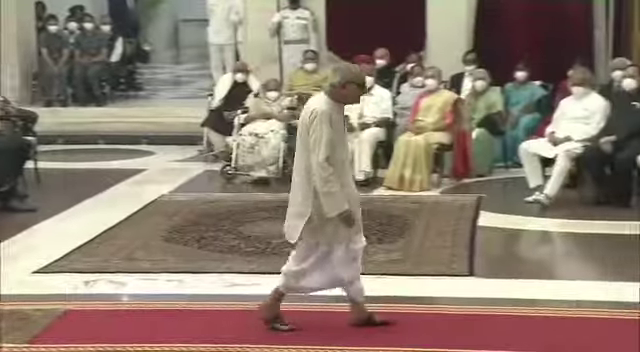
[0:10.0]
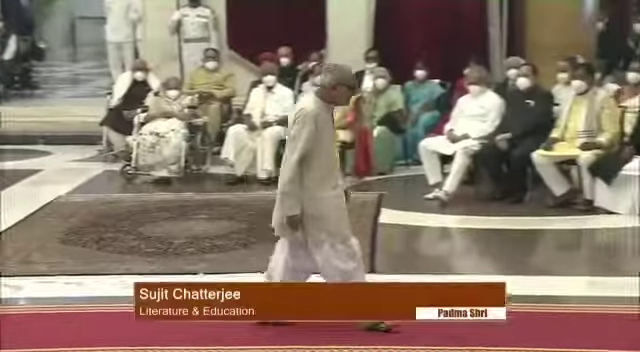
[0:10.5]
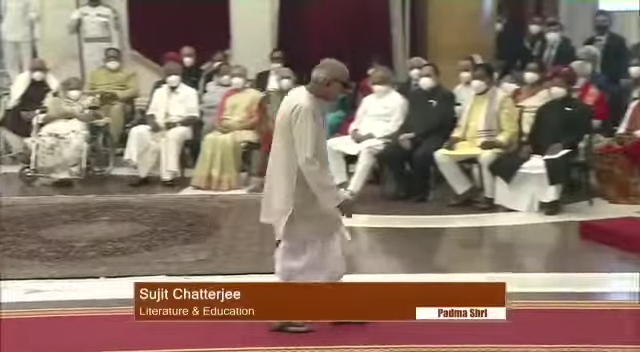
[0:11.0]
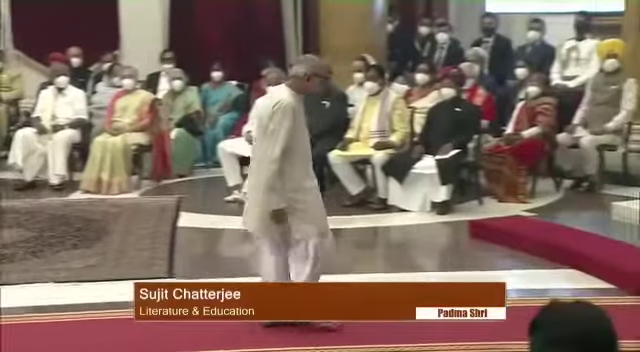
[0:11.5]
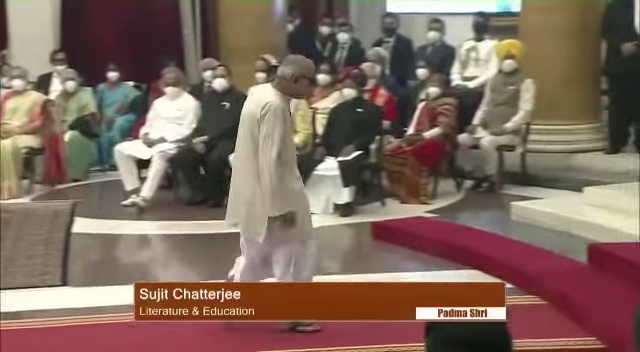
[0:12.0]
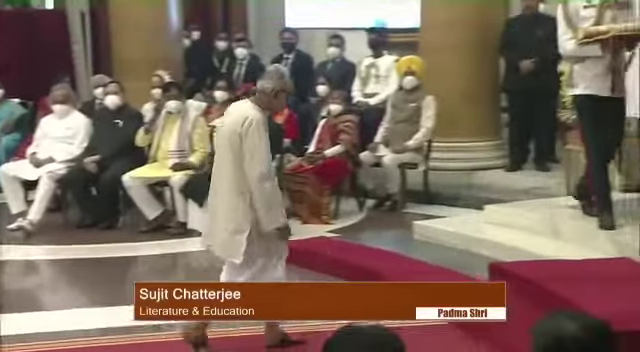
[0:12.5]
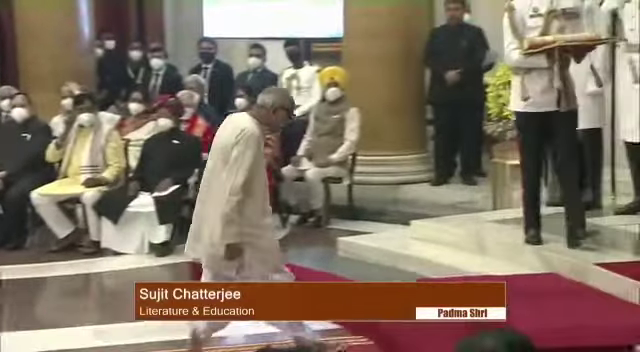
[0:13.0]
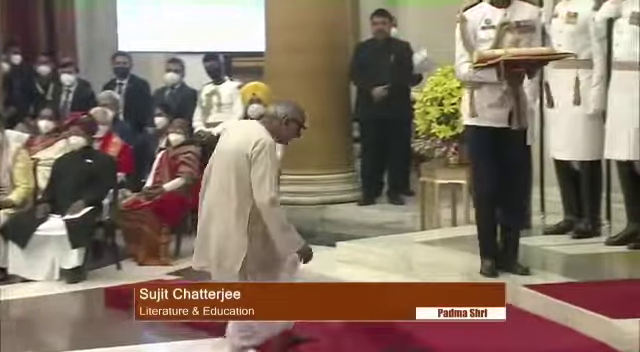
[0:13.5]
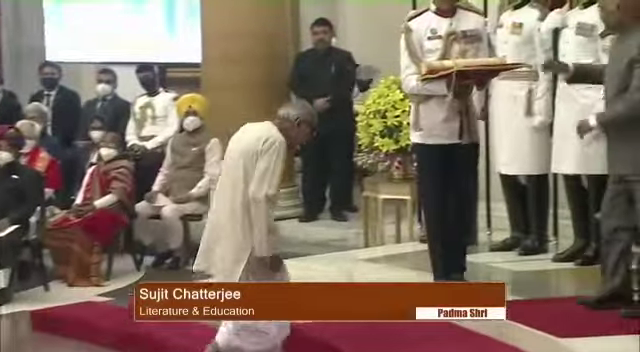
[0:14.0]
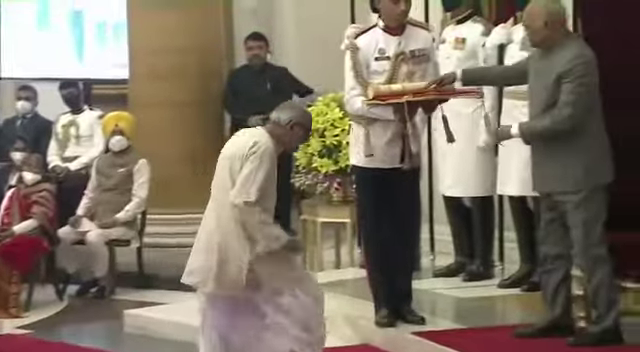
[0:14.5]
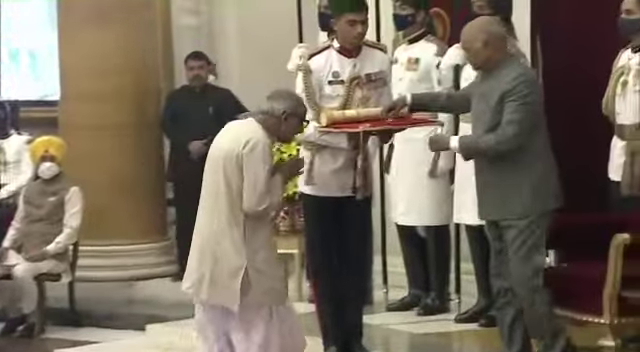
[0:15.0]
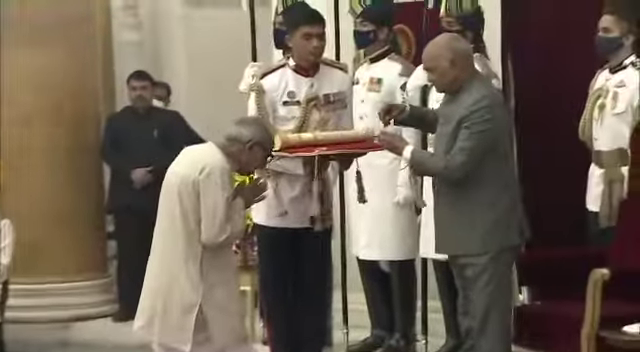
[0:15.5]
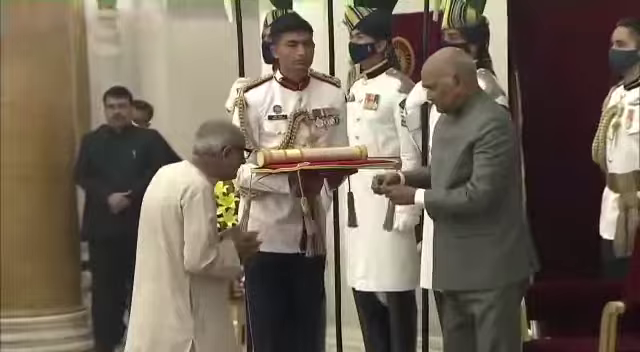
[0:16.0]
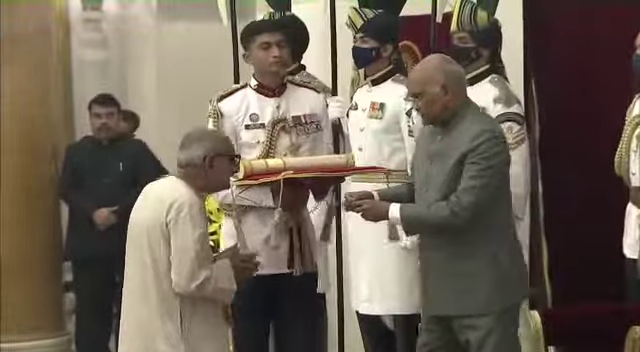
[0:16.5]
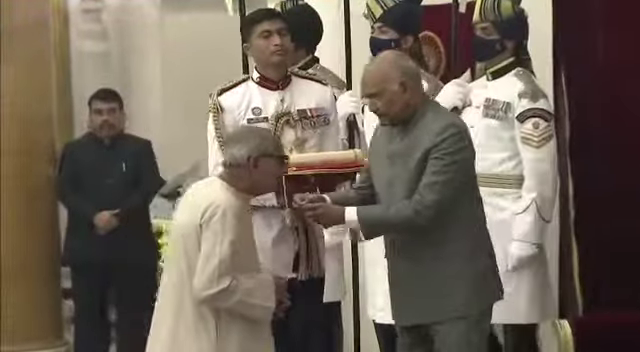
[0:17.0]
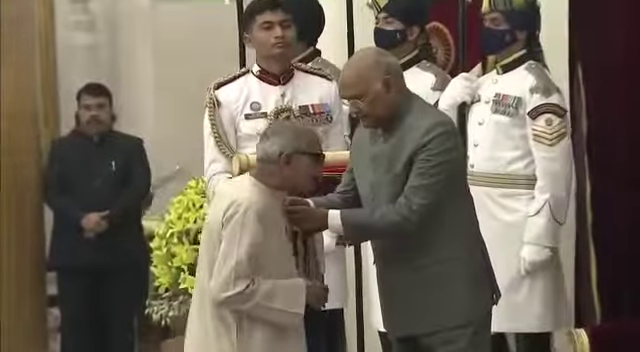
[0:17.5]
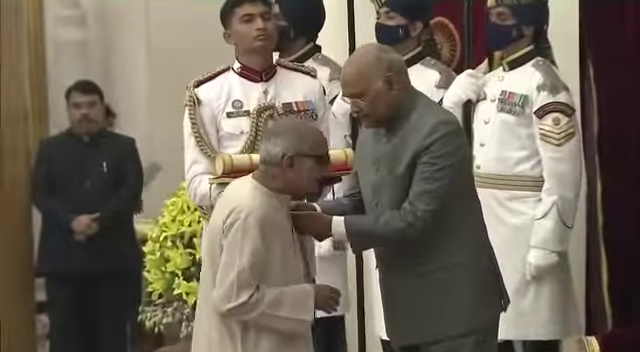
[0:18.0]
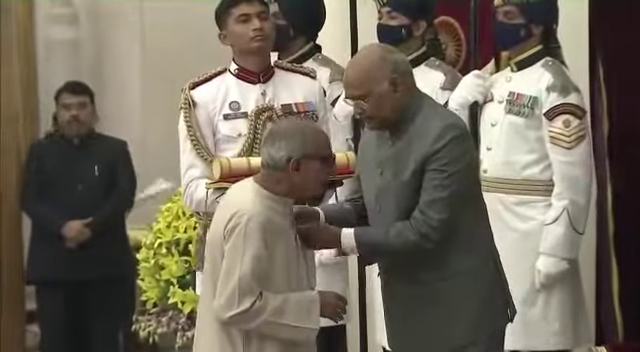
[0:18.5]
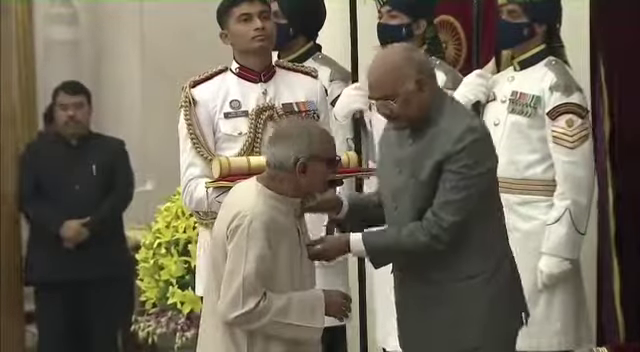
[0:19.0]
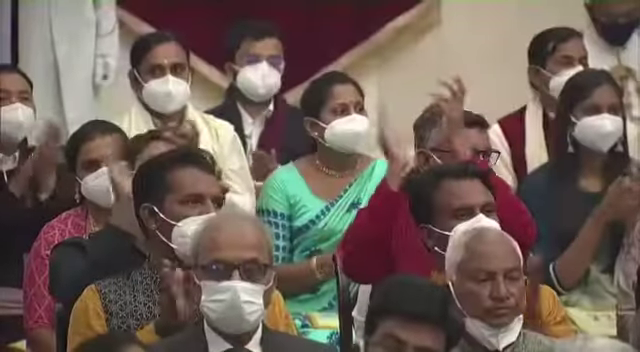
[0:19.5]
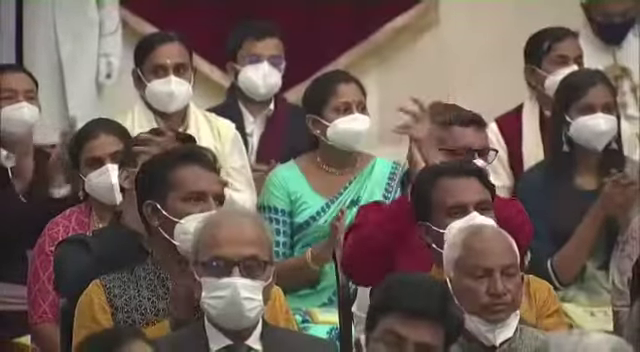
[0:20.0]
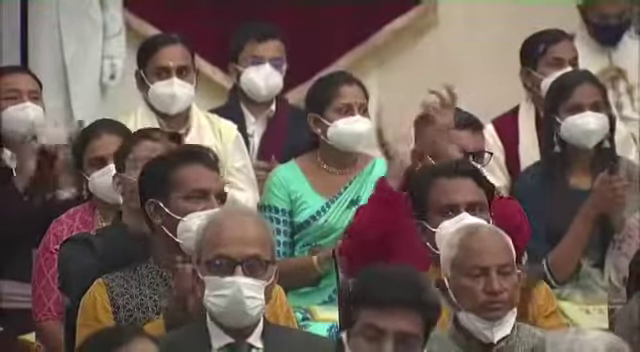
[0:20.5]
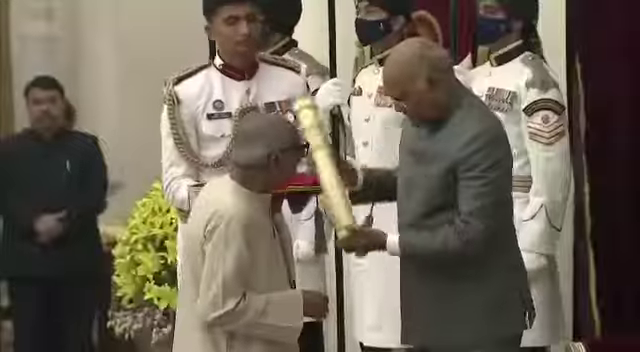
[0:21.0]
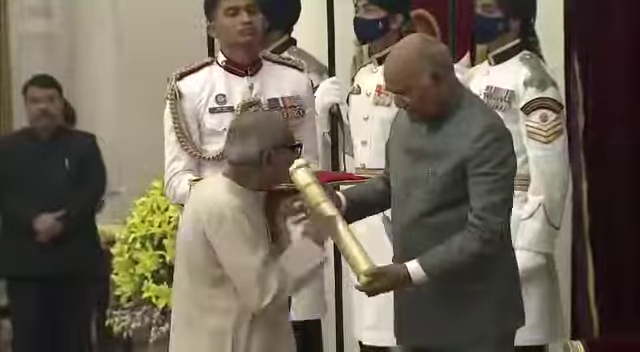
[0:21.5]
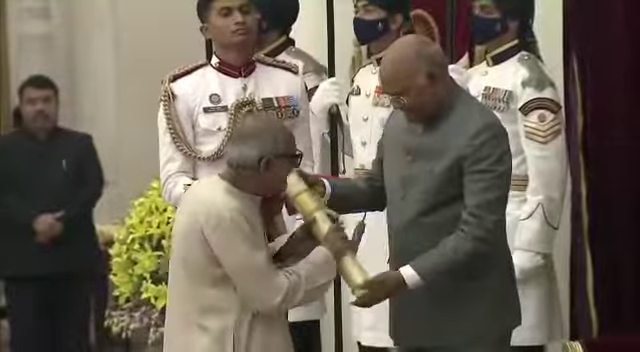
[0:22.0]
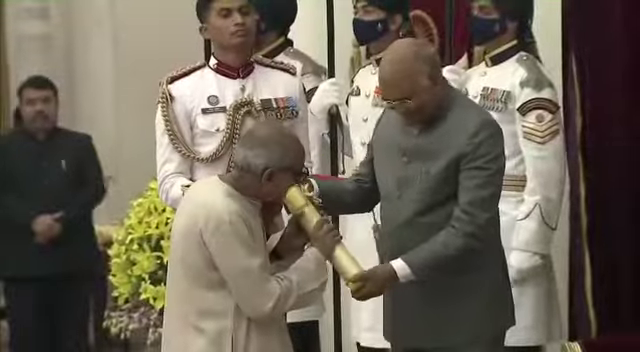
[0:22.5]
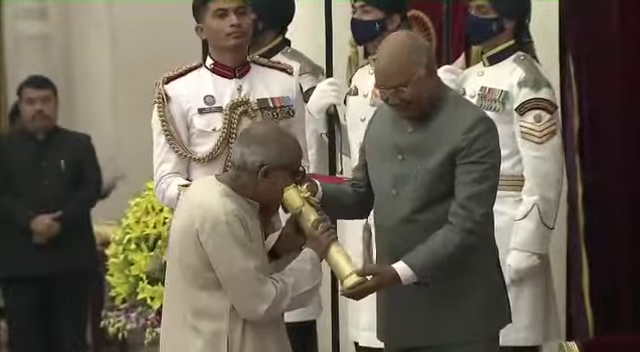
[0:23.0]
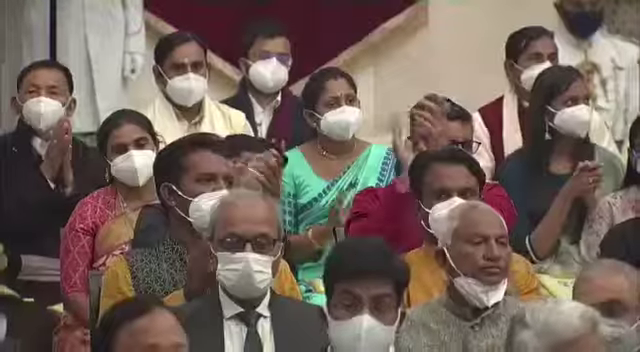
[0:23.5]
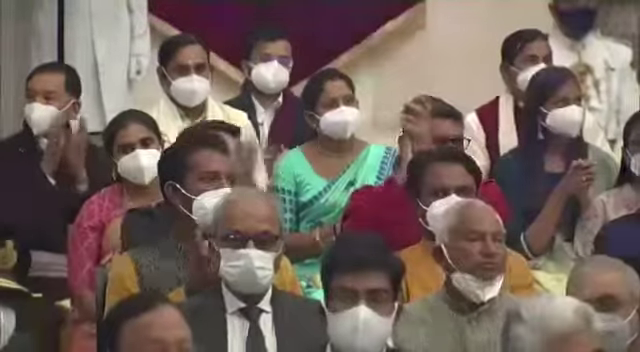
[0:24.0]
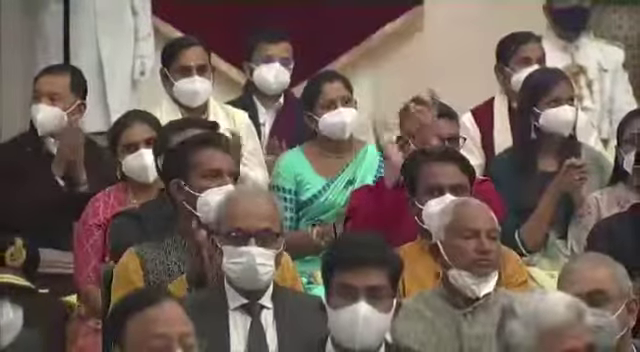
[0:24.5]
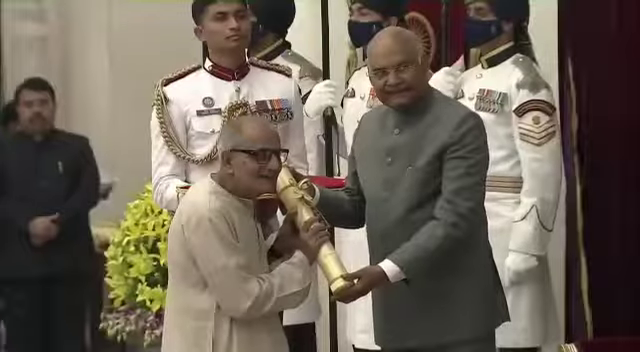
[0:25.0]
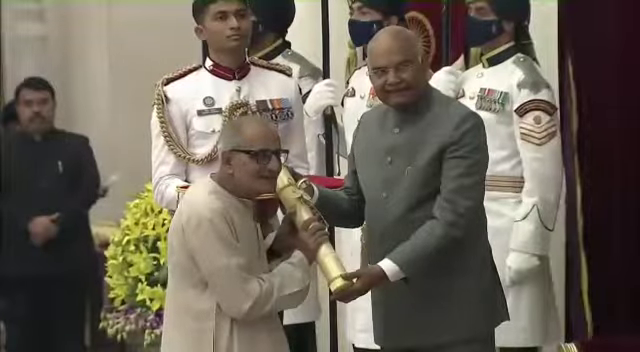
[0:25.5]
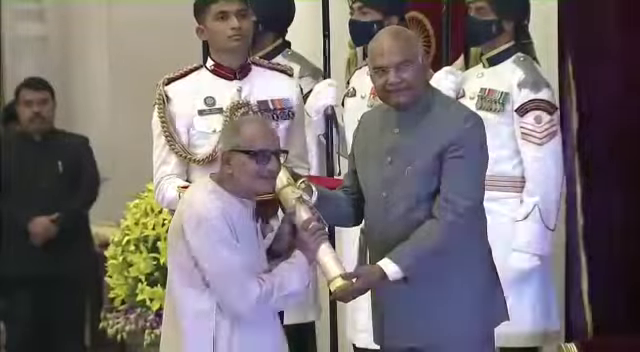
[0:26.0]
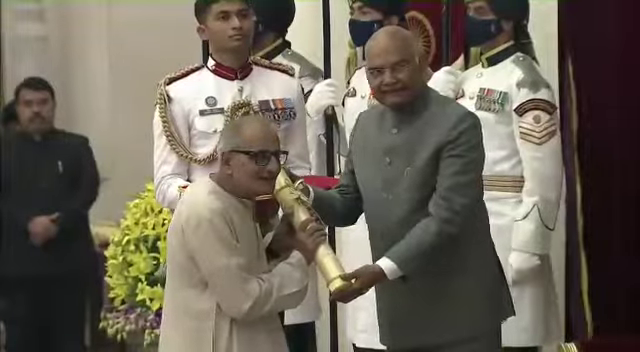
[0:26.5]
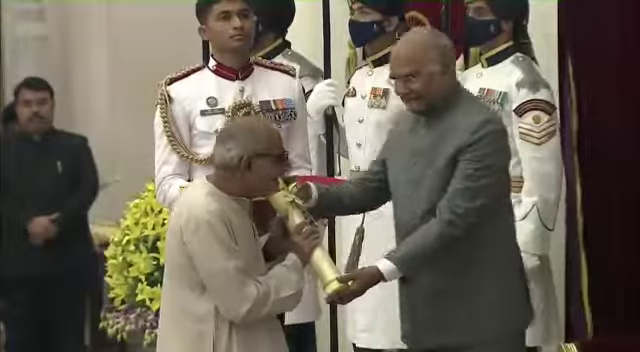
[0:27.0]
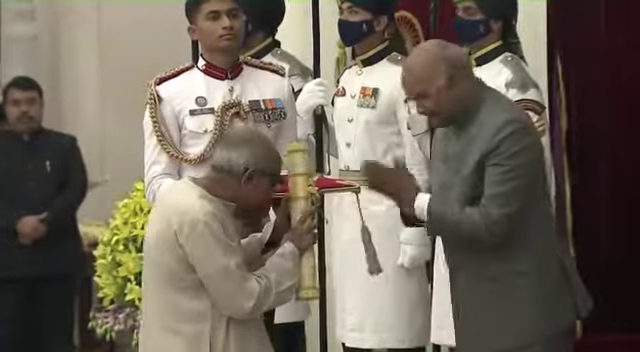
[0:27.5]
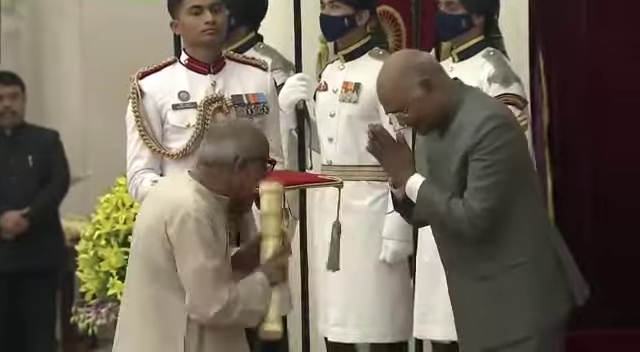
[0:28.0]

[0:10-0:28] The 77-year-old schoolteacher walks into the ceremony held in his honor, appearing very spry. He has ear-length gray hair and wears black-rimmed glasses, an untucked white long-sleeved shirt and white pants. He receives an award from a man who looks like some sort of official; the official has gray hair, is bald on top, and wears a gray suit jacket over a long-sleeved white shirt. The official pins an award onto the schoolteacher, then hands him a white and gold scroll. Four men are dressed in formal military attire that is white, red, black and gold. Three of them wear royal blue face masks, while the one toward the front wears no face mask.